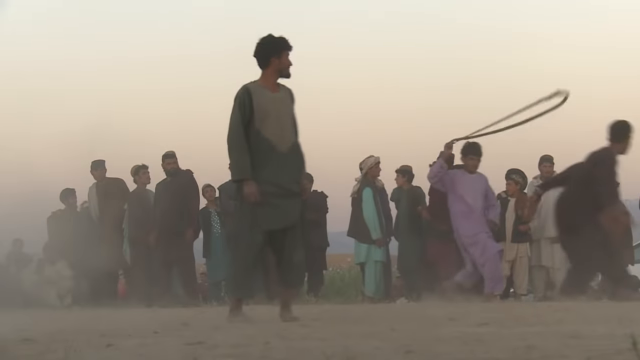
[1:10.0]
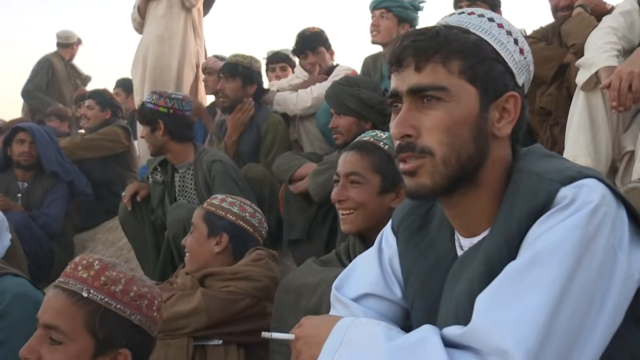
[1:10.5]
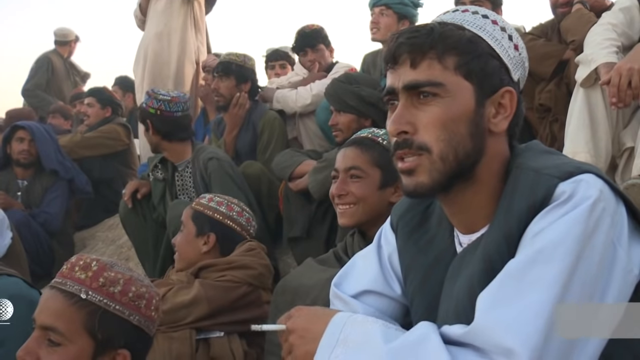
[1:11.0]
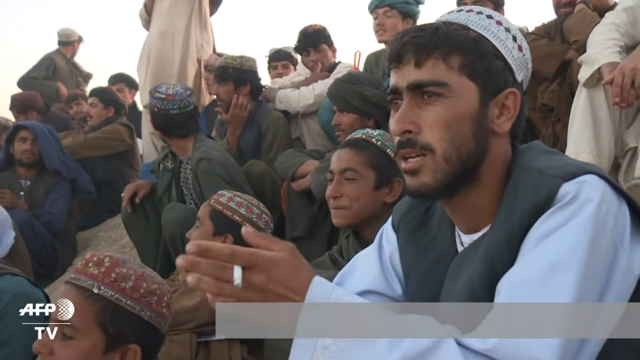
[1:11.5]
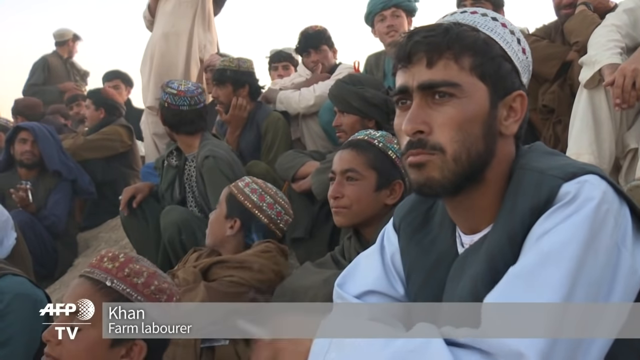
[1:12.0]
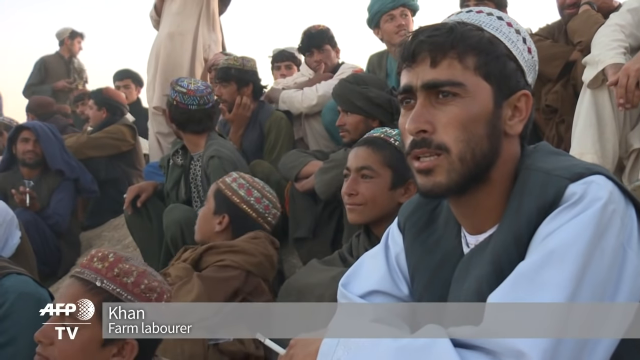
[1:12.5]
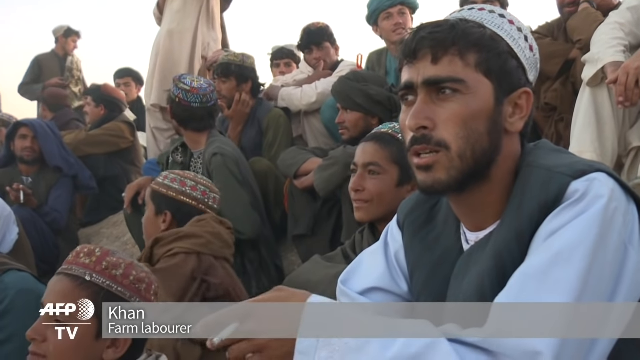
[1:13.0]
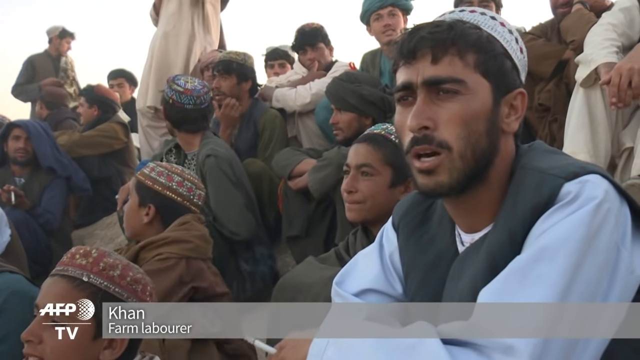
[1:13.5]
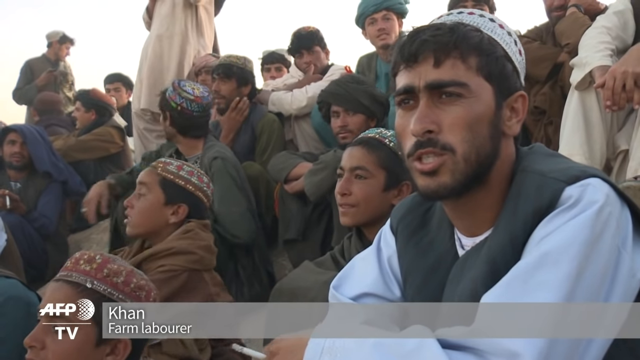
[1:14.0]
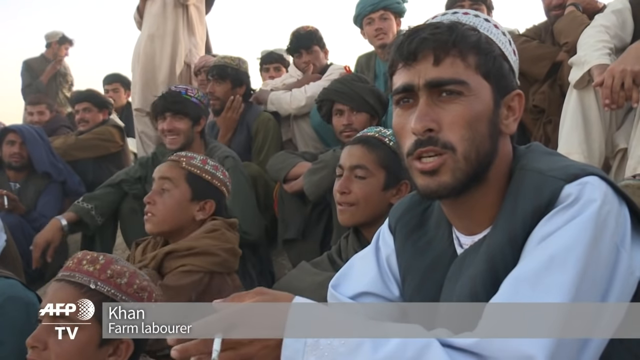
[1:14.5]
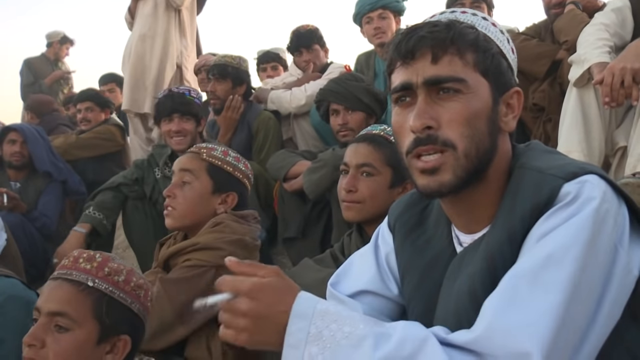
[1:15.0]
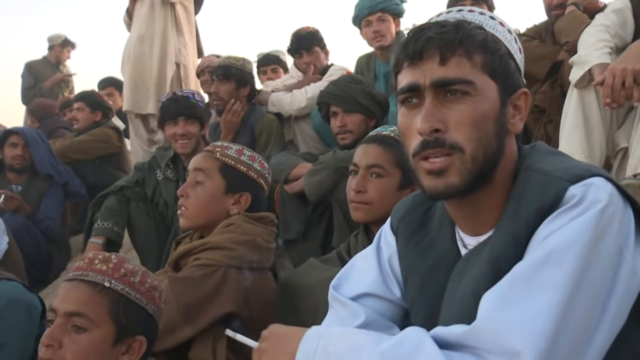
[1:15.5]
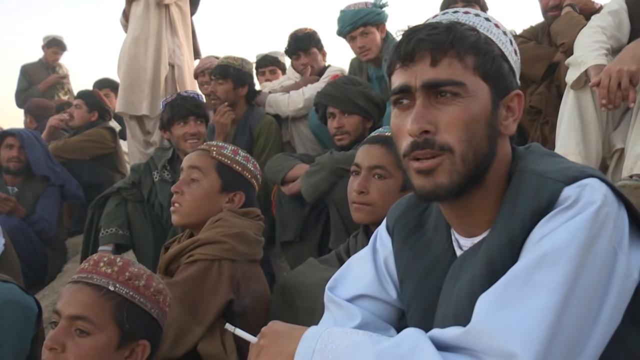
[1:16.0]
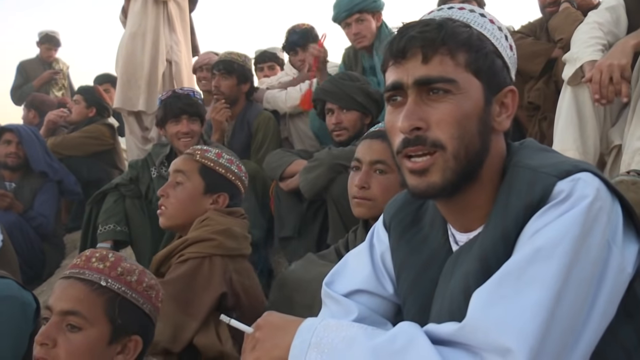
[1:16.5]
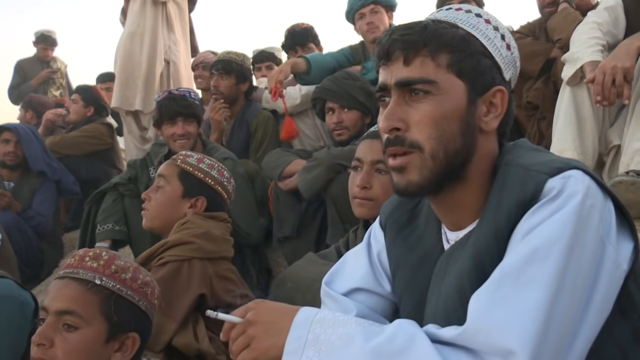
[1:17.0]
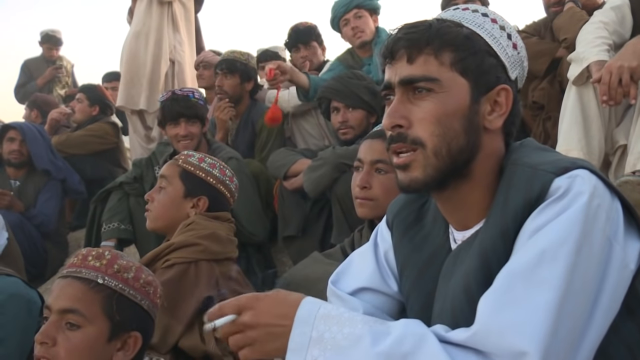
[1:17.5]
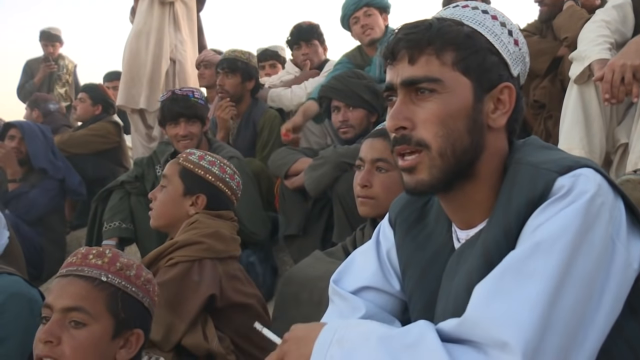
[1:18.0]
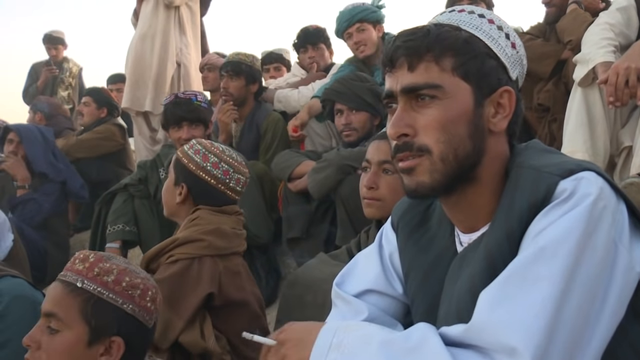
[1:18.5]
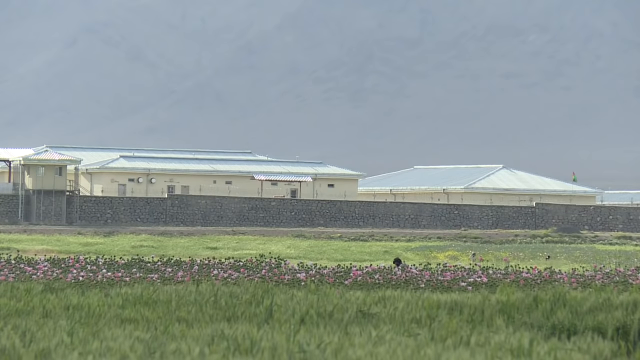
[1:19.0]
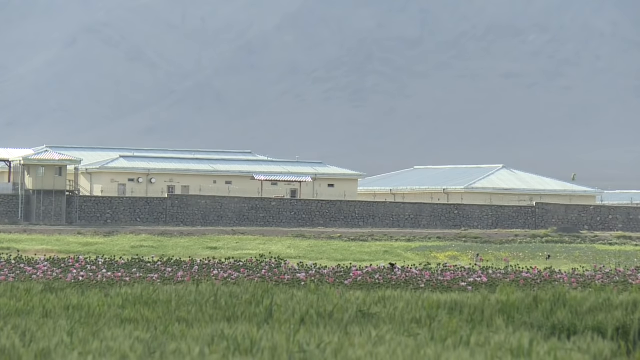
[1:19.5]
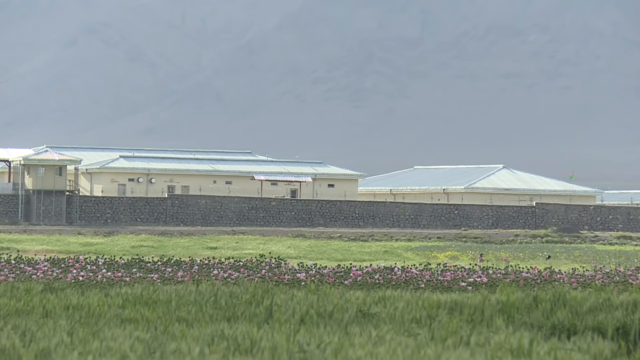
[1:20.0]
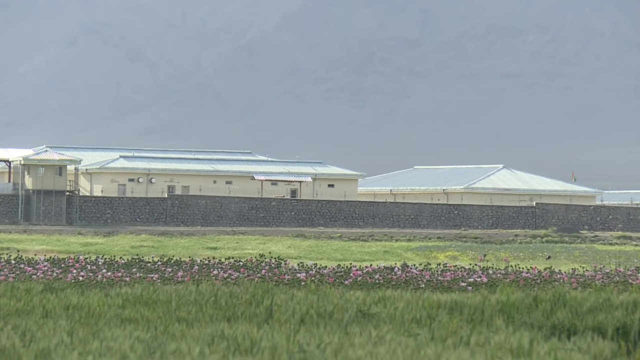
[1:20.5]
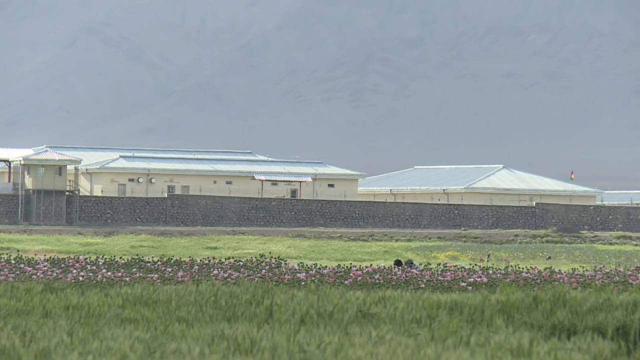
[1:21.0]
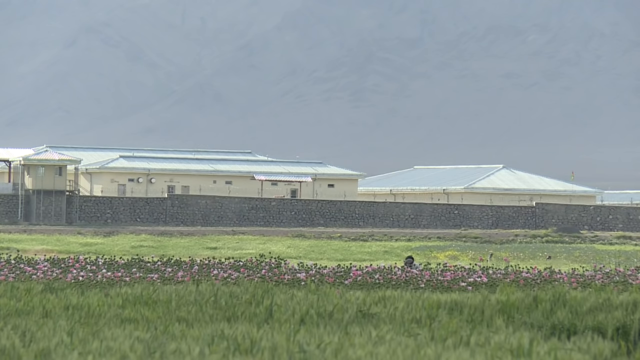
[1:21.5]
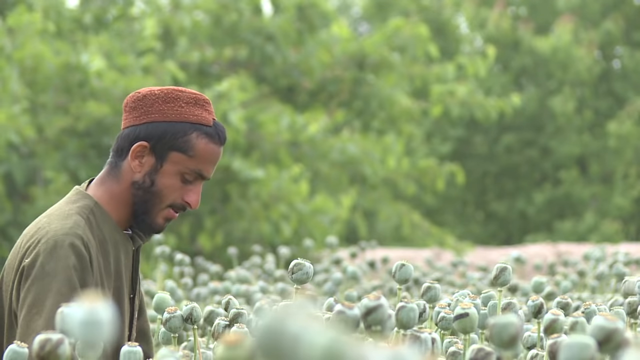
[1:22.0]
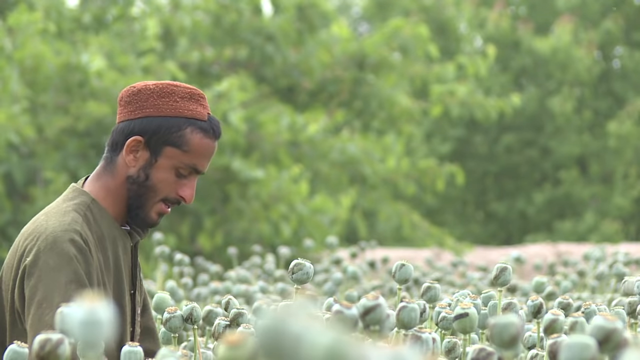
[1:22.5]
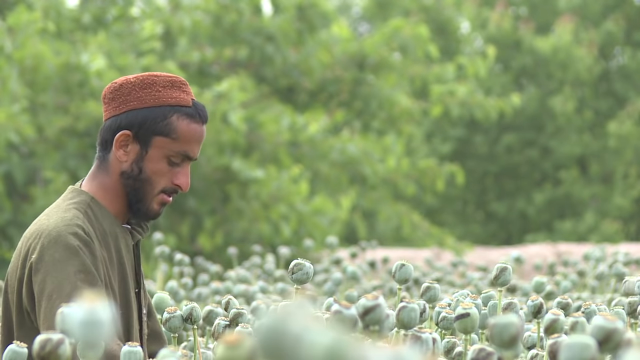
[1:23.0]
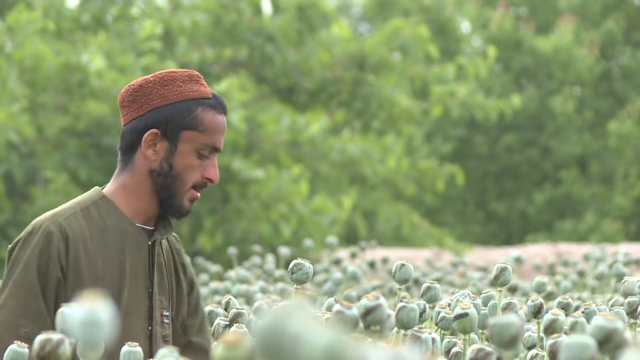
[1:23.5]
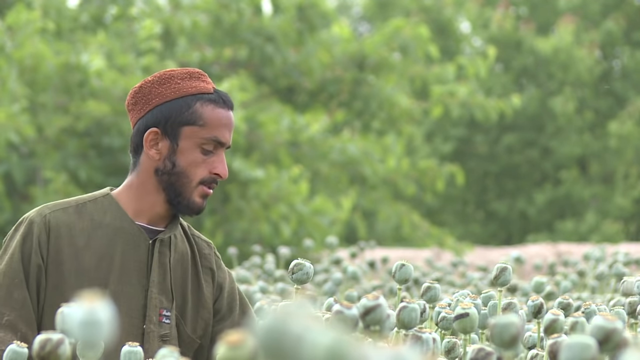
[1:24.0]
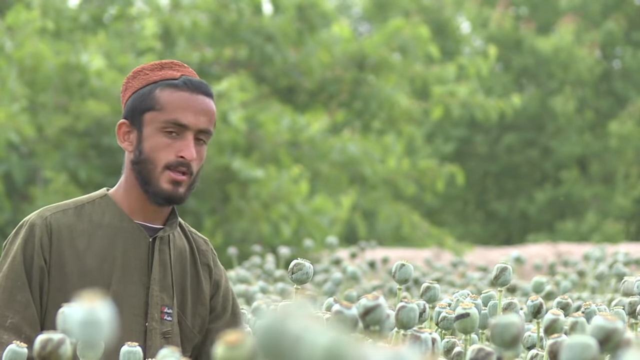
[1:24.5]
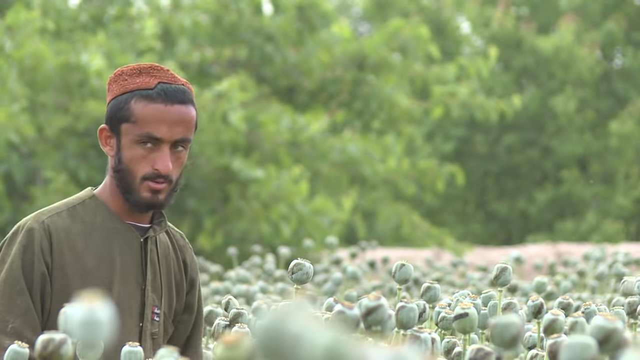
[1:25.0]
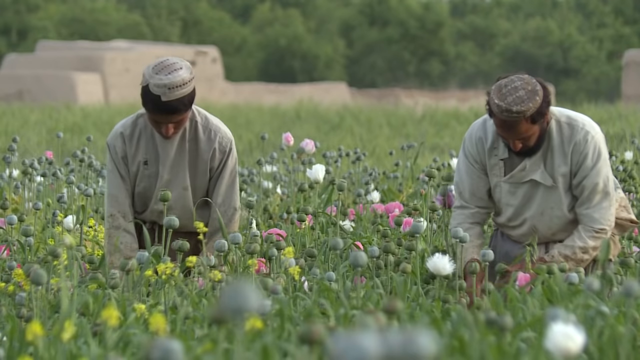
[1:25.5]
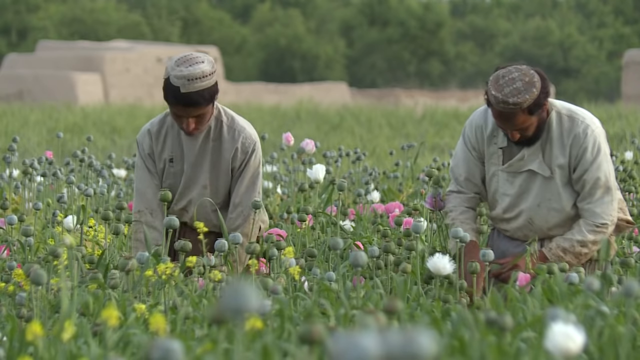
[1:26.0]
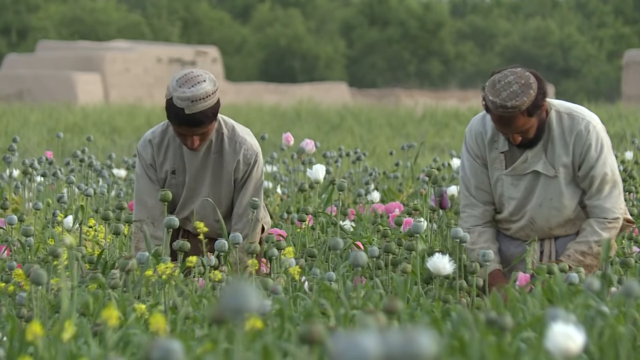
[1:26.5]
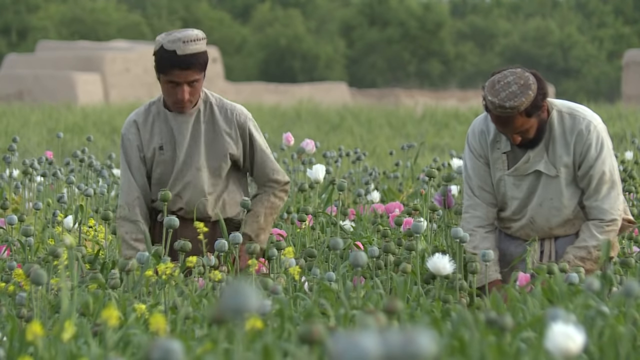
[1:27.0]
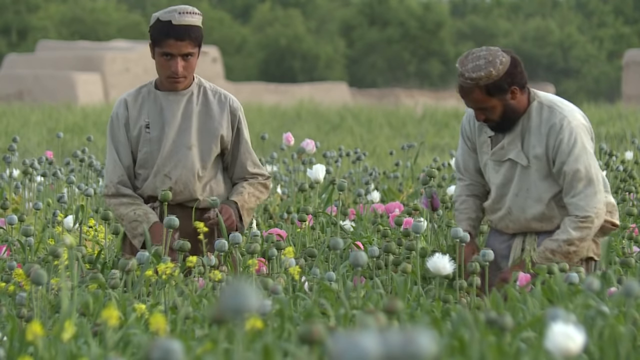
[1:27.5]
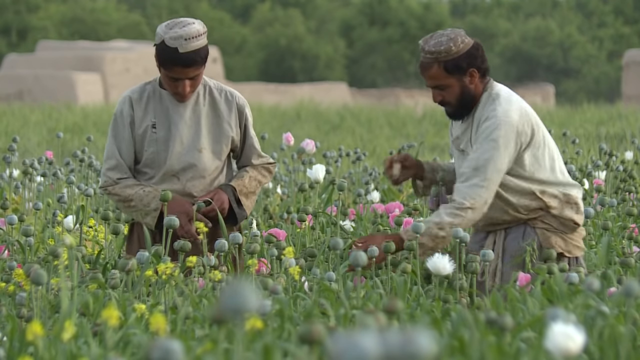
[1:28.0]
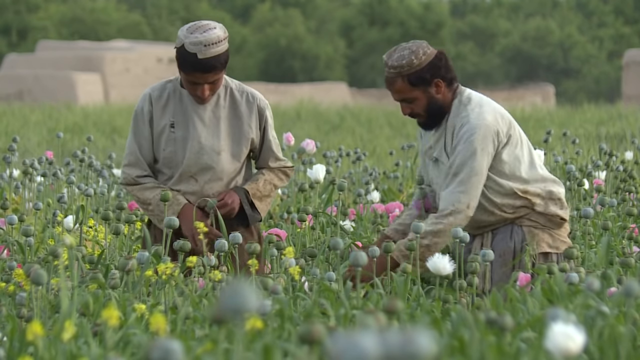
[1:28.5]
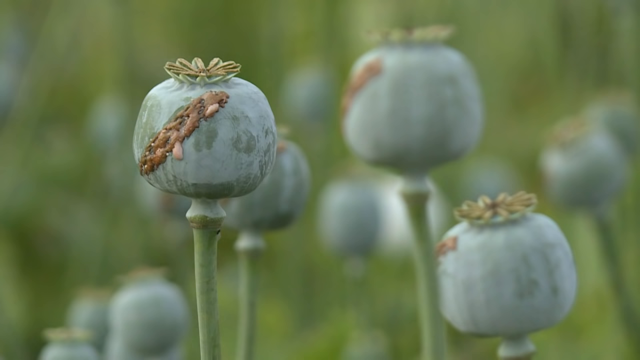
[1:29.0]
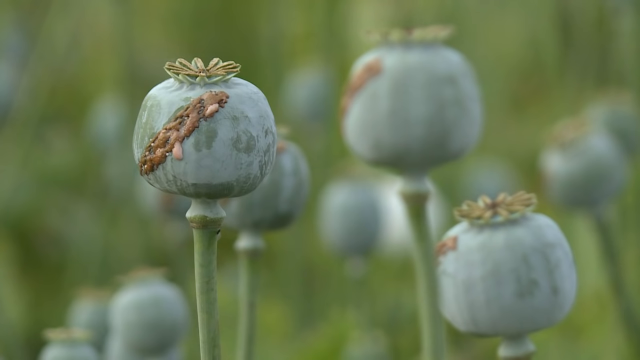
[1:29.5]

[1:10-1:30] A man who looks about 35 is on the right side facing left, with people all around him across the screen and a little sky across the top. He wears a white shirt, a green vest and a tan hat, and has a dark black beard and black hair. He holds his arms out in front of him as he talks, with a cigarette in his left hand. Behind him people are kind of mingling and talking; everyone in this shot is sitting down. A wide shot follows, with big green waves near the bottom, a strip of green and purple poppy, and more green grass. There is a dark gray stone wall, and behind it a white building with a light blue roof that almost looks like a prison, under a cloudy blue sky. What looks like a watchtower is to the left of it, set in front of the building and built into the wall. A man stands in the poppy field, which is about elbow high, facing right and picking the poppy; he wears a green shirt and red hat and has a black beard and black hair, looking down with his head turned right. It then cuts to two people dressed in all white with green hats, working in the poppy field facing the camera.